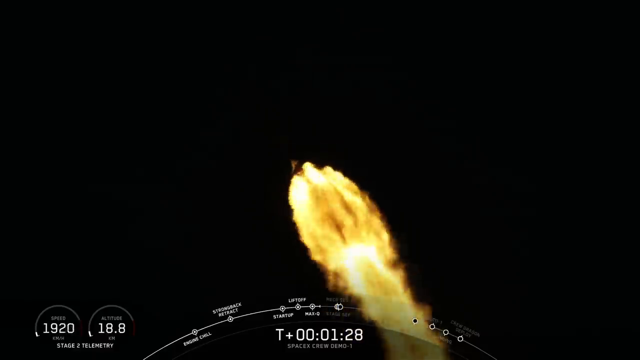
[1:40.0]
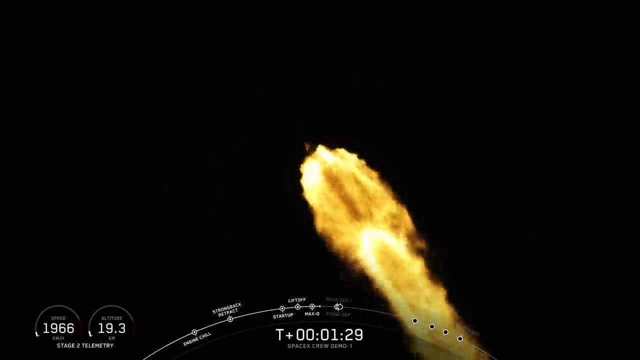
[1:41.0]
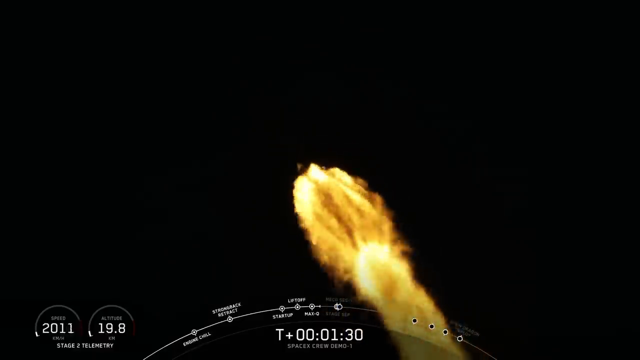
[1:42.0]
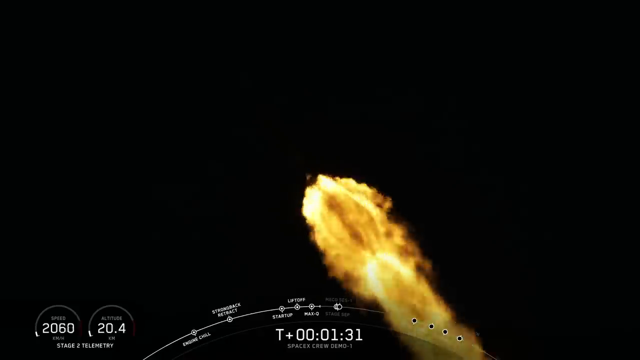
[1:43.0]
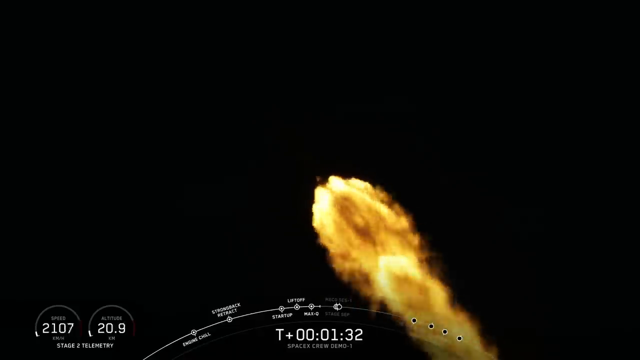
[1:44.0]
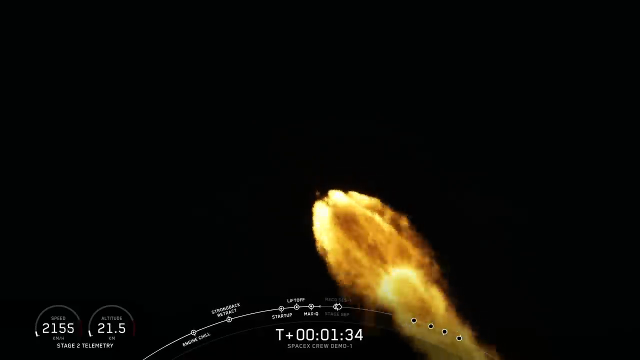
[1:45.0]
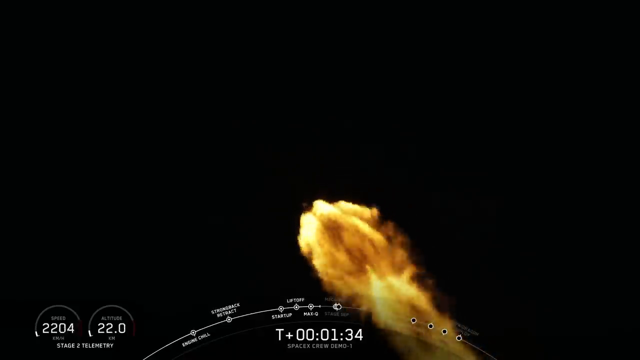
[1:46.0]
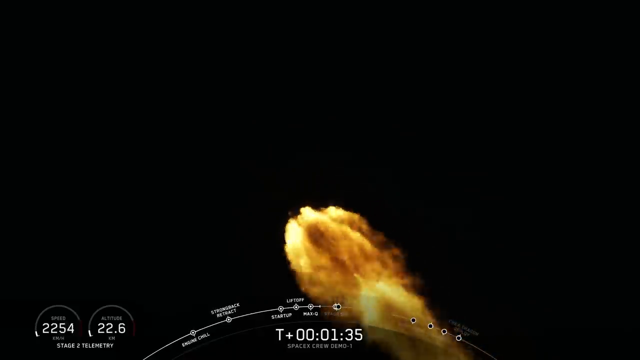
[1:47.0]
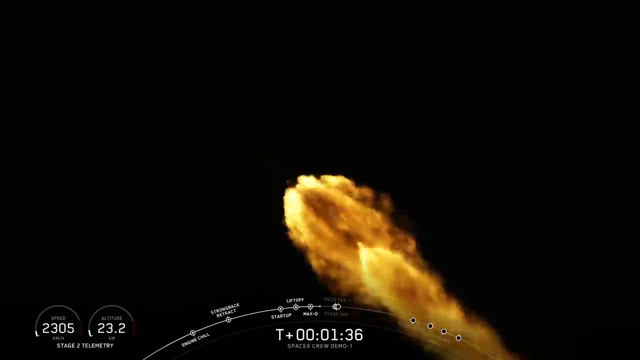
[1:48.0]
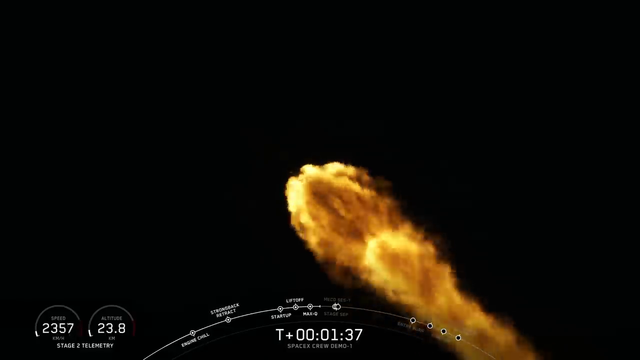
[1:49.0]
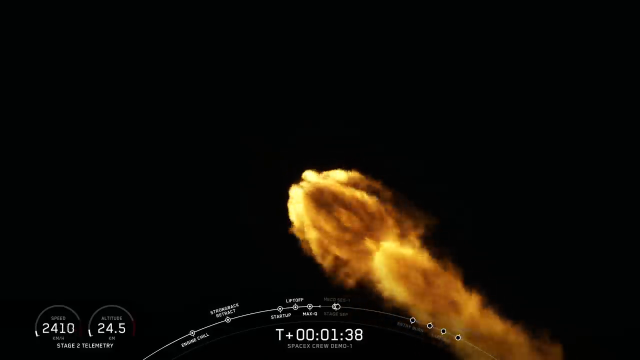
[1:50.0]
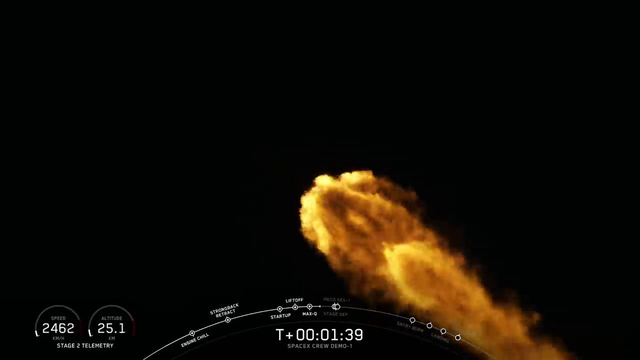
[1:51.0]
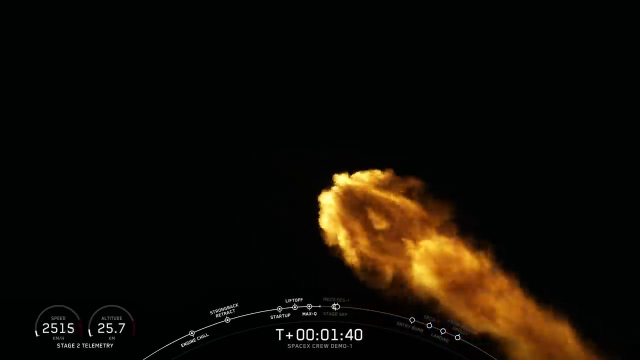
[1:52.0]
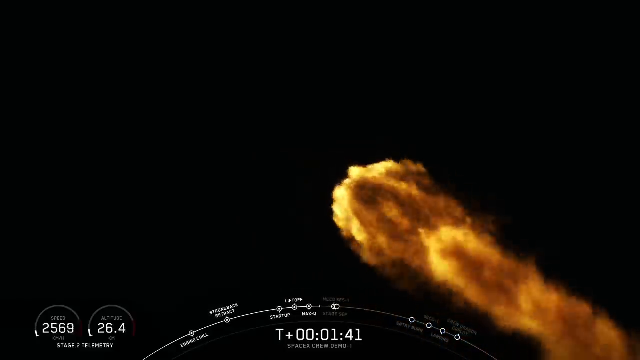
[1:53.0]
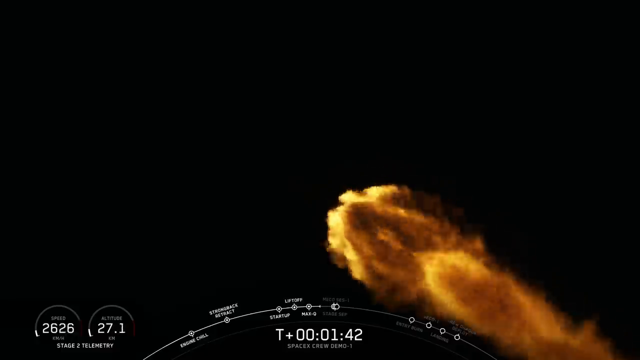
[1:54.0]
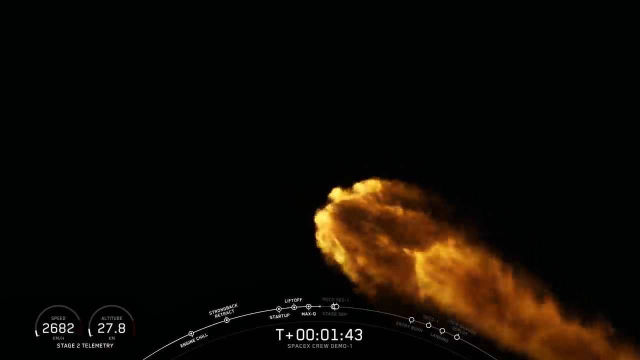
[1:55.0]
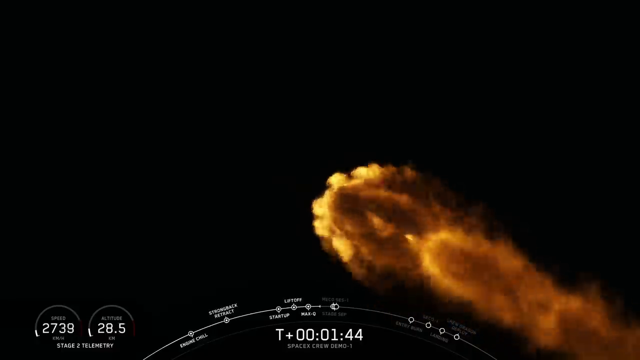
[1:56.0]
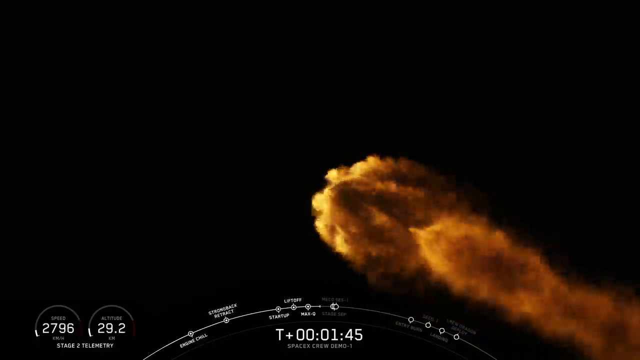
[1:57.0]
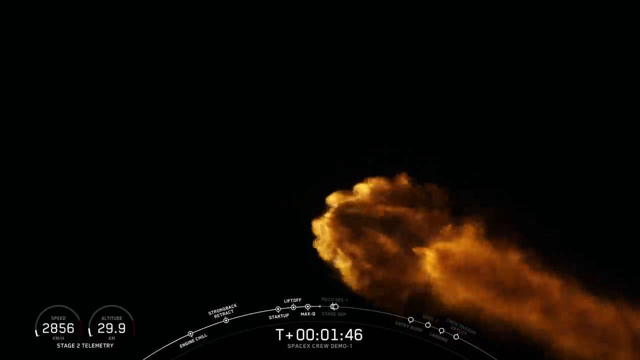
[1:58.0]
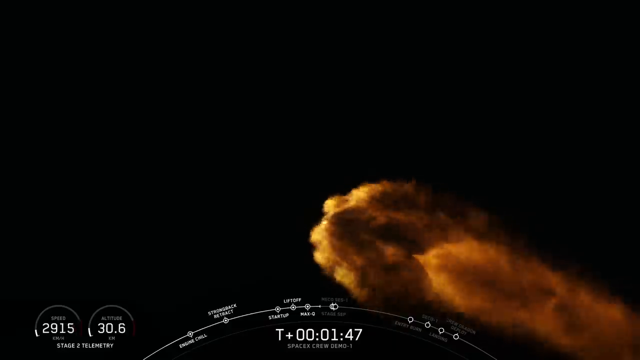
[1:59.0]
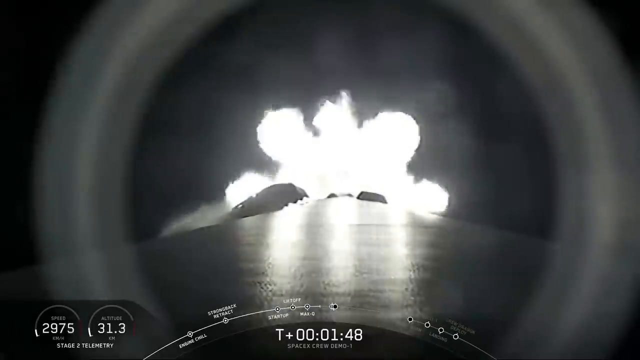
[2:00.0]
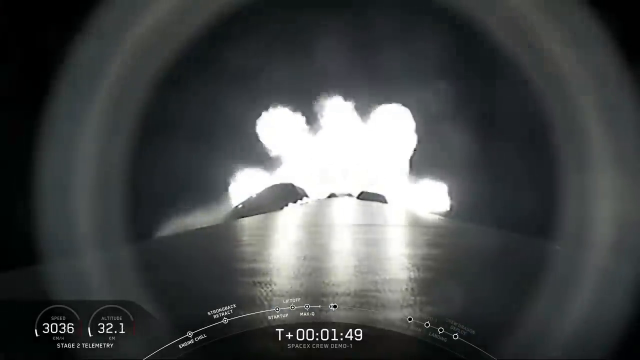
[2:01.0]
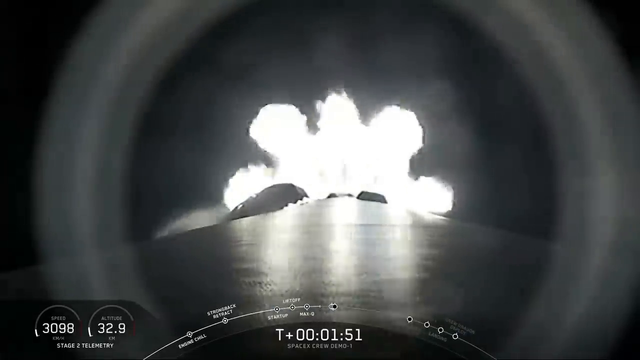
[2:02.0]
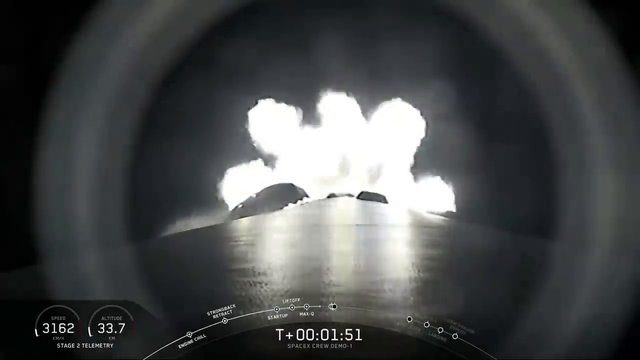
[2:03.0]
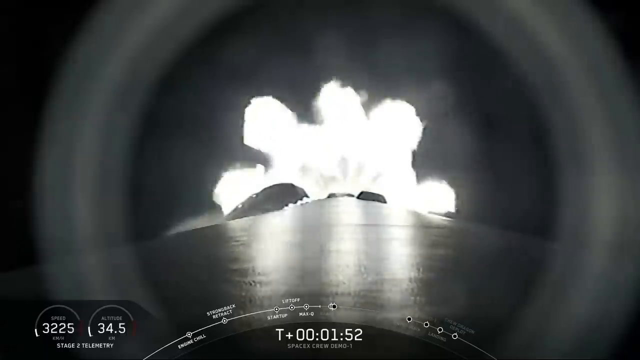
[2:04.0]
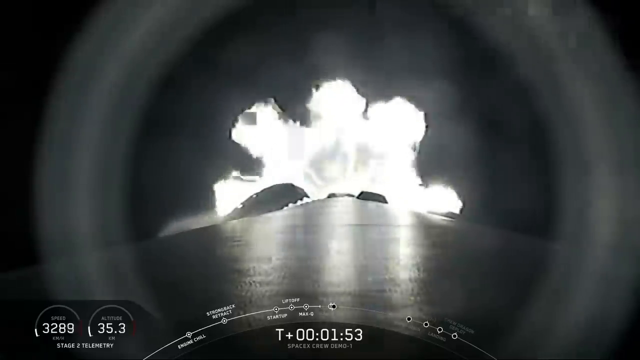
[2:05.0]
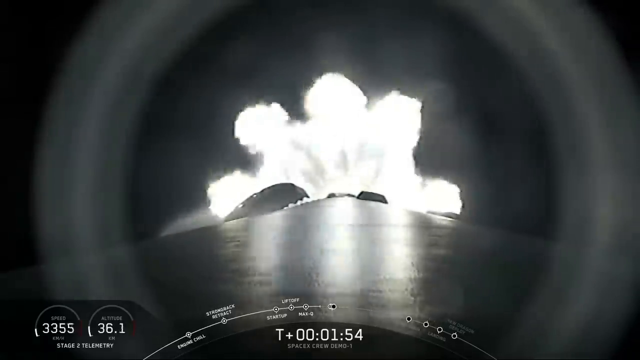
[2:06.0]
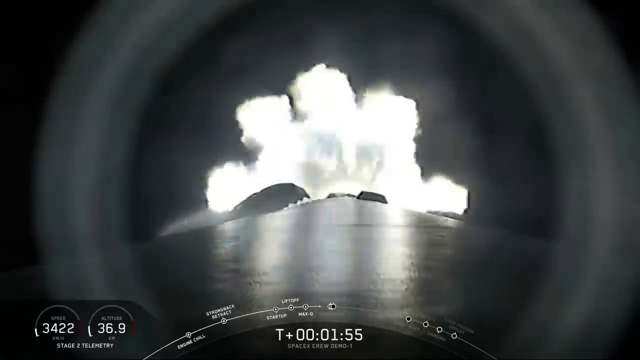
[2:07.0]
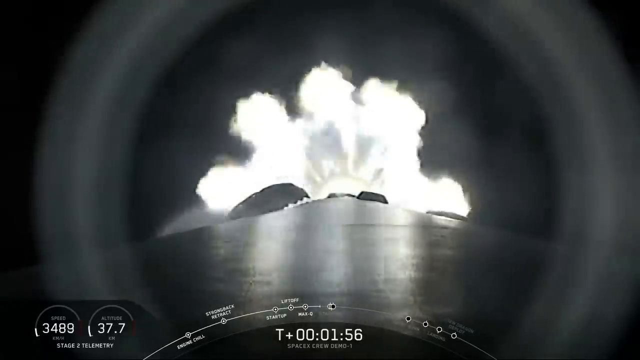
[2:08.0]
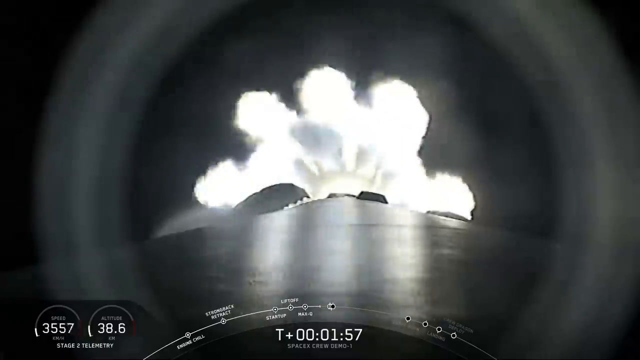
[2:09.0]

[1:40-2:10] The fiery glow from the bottom of the rocket booster continues as the timer in the superimposed graphics at the bottom of the screen exceeds 1 minute and 30 seconds. The speed gauge exceeds 2,100 kilometers an hour and the altitude reaches 21 kilometers. The milestone arc shows the launch about halfway along it; the labels are not completely legible, but the progress dot has passed five plotted milestones. The fiery booster tail slowly moves to the bottom right of the screen as the camera attempts to zoom in even closer, while the rocket itself is overcome by darkness. The video cuts back to the camera affixed to the rocket looking down towards the fiery boosters, with the same halo effect forming a perfect circle whose edges meet the left and right of the screen, and the fiery bottom of the booster in the middle of the circle.